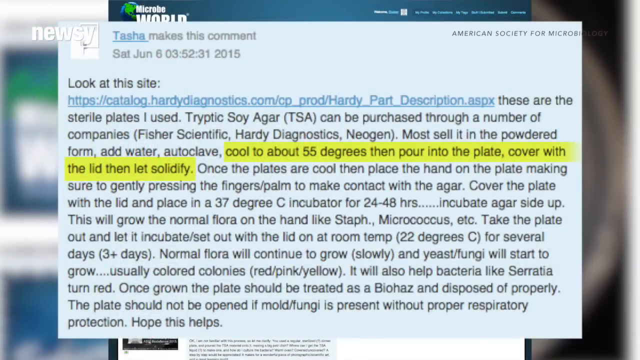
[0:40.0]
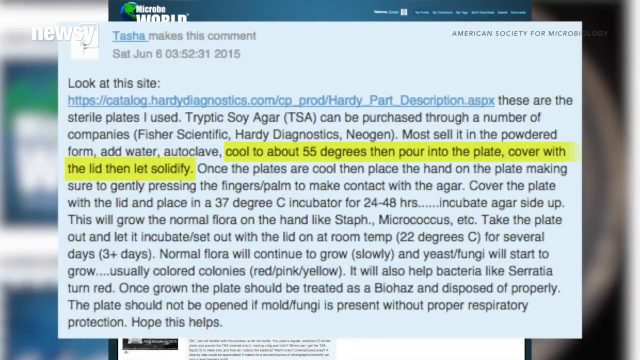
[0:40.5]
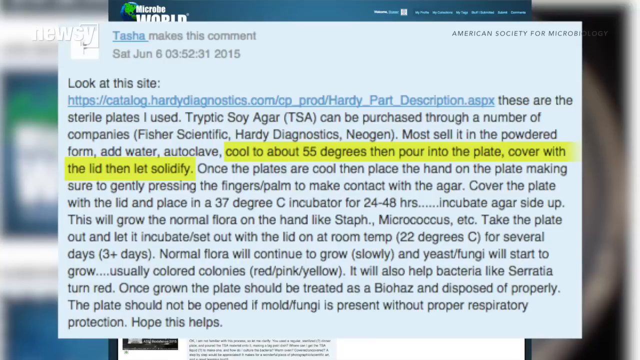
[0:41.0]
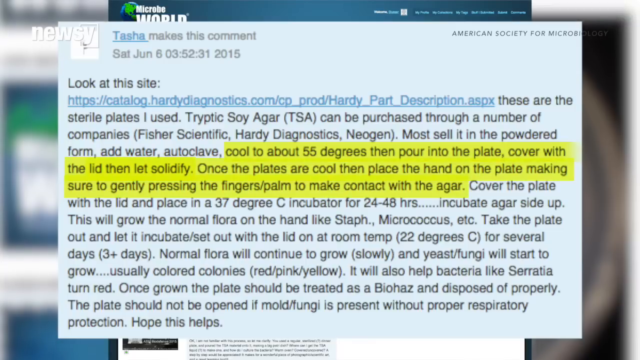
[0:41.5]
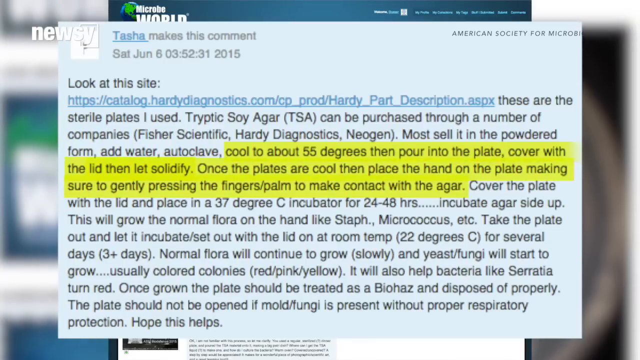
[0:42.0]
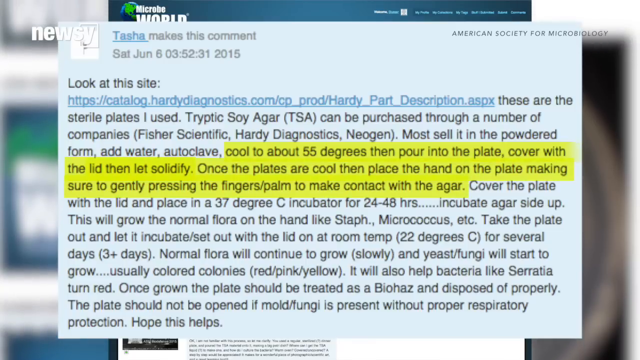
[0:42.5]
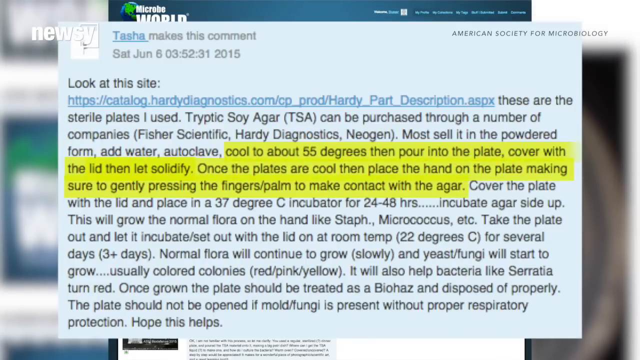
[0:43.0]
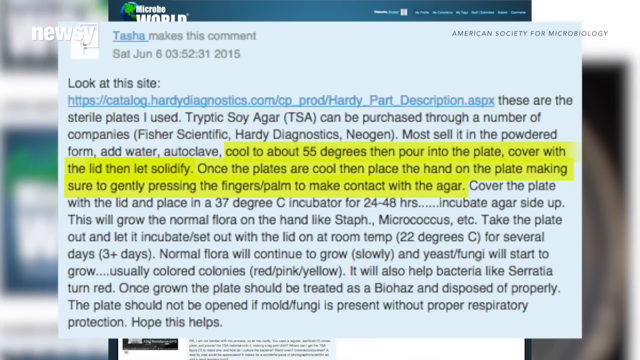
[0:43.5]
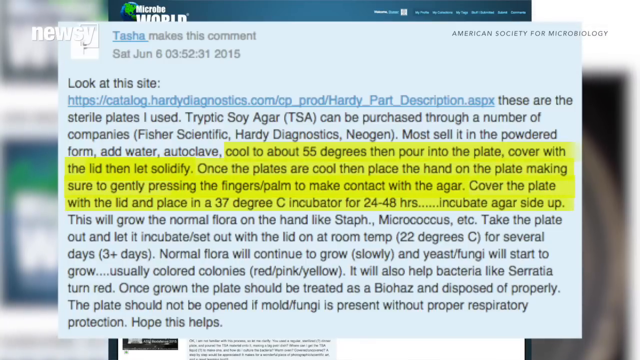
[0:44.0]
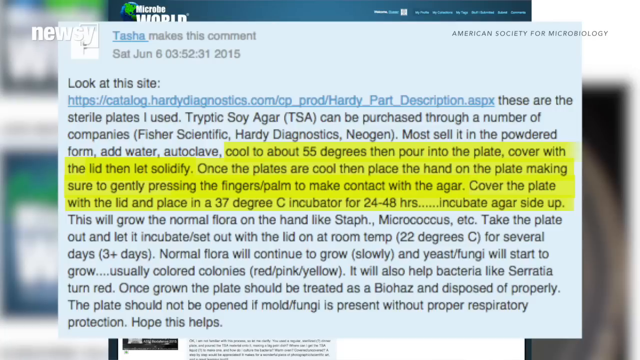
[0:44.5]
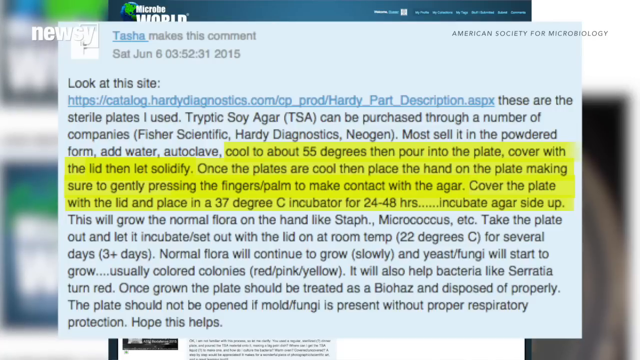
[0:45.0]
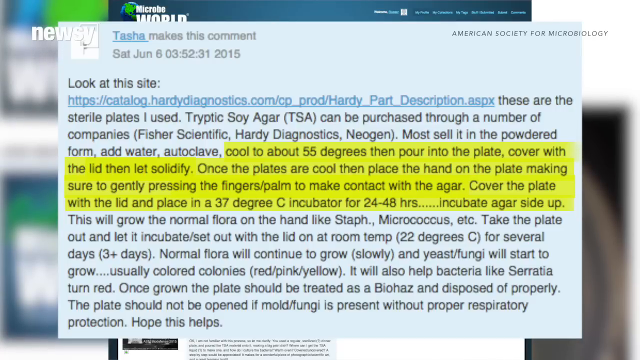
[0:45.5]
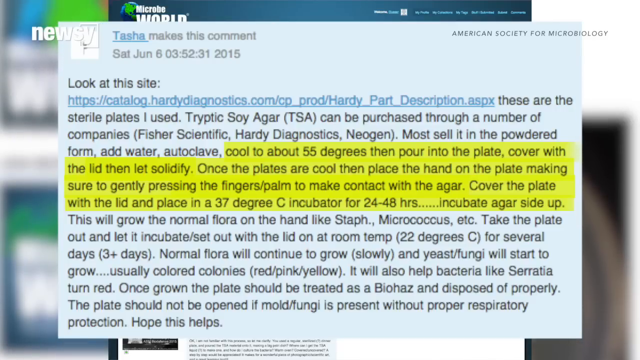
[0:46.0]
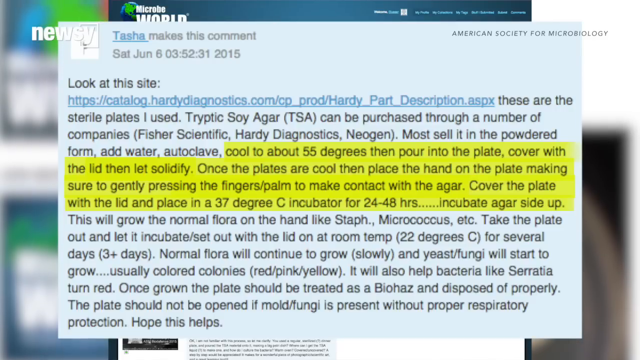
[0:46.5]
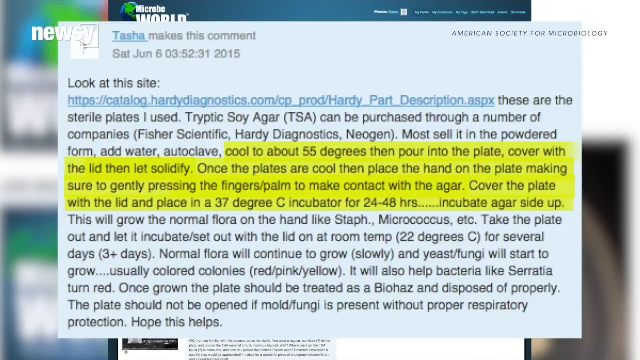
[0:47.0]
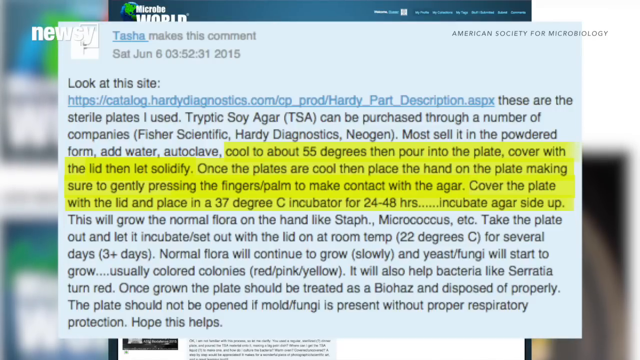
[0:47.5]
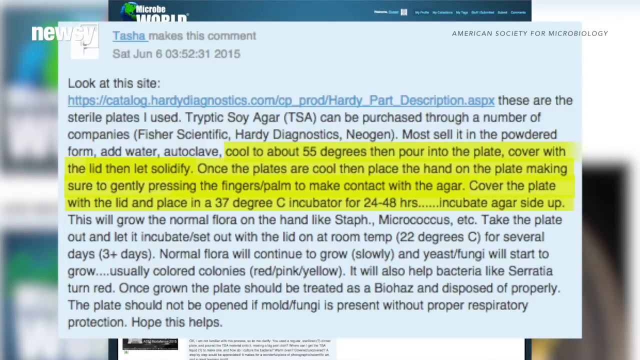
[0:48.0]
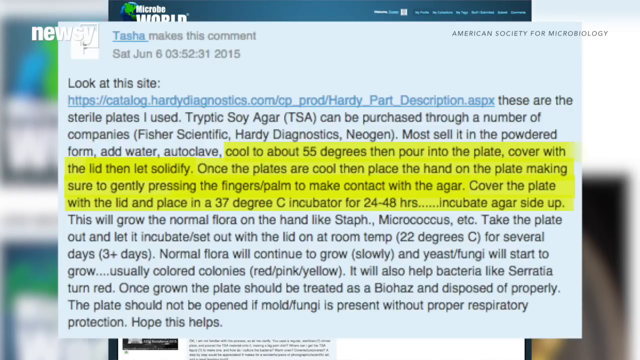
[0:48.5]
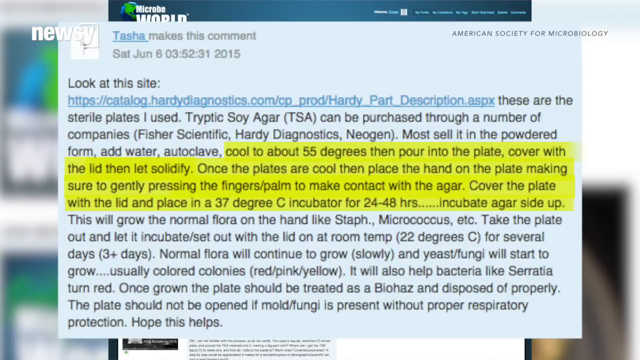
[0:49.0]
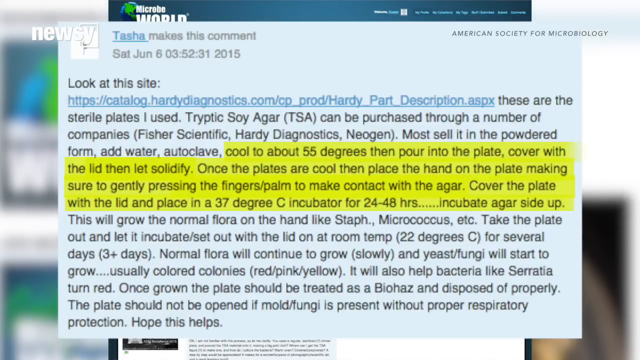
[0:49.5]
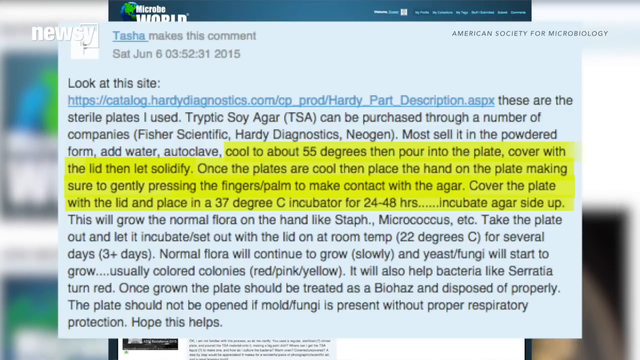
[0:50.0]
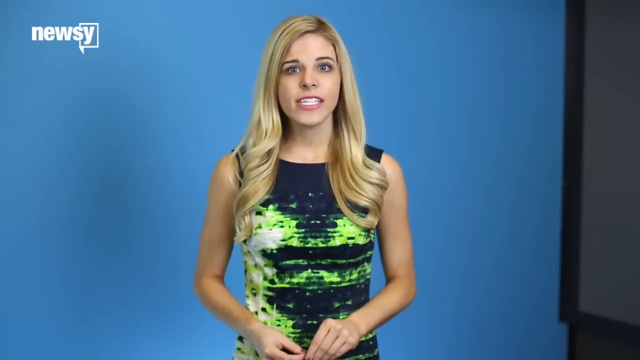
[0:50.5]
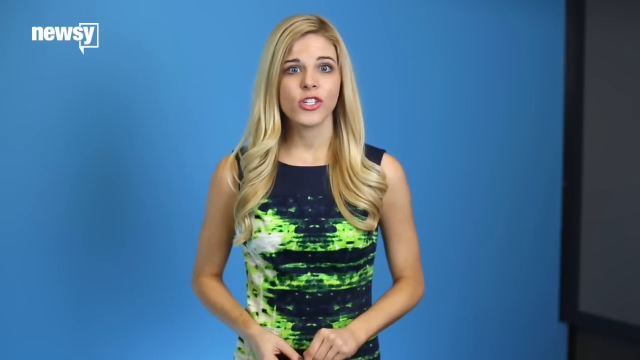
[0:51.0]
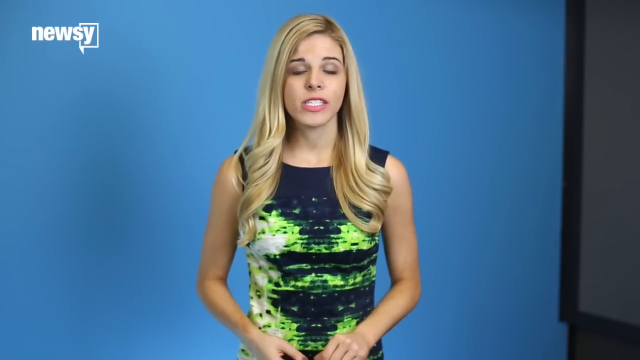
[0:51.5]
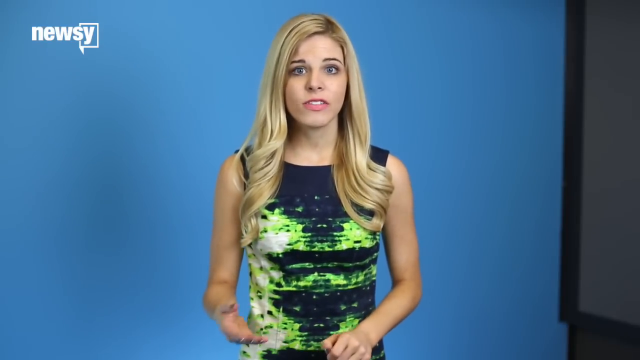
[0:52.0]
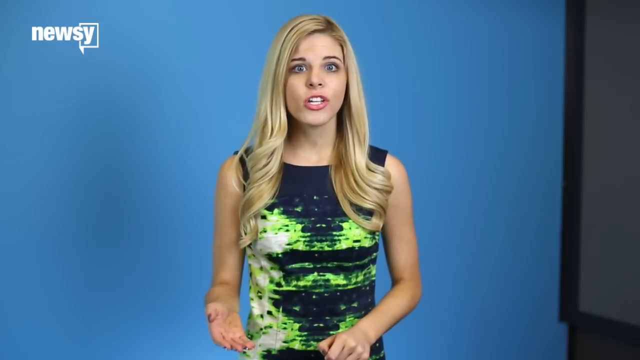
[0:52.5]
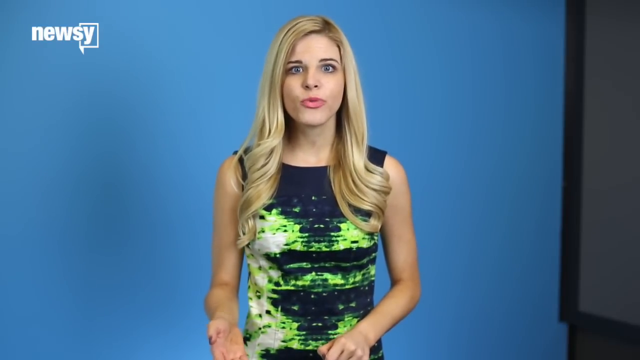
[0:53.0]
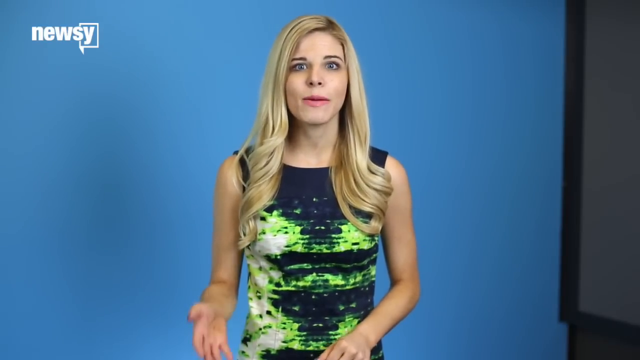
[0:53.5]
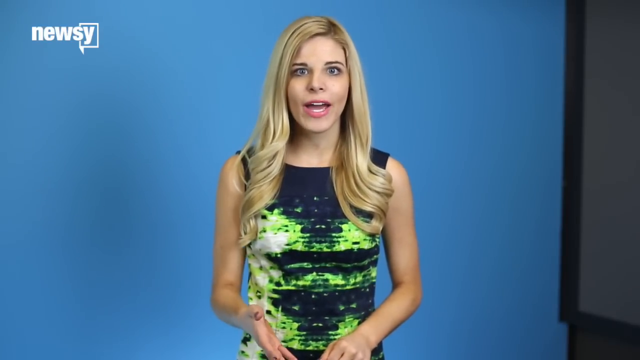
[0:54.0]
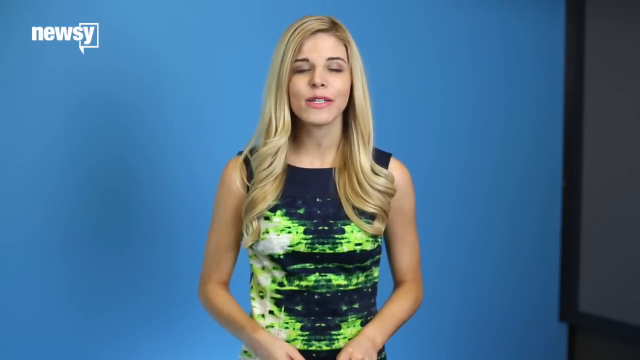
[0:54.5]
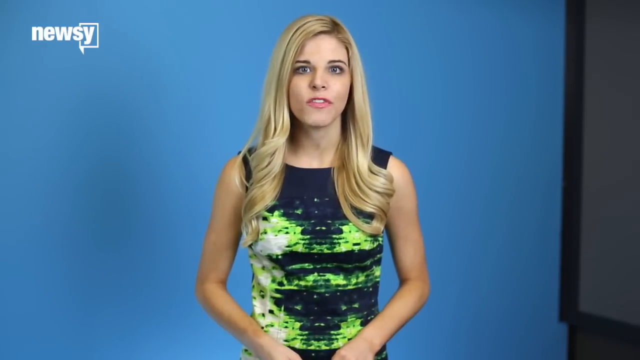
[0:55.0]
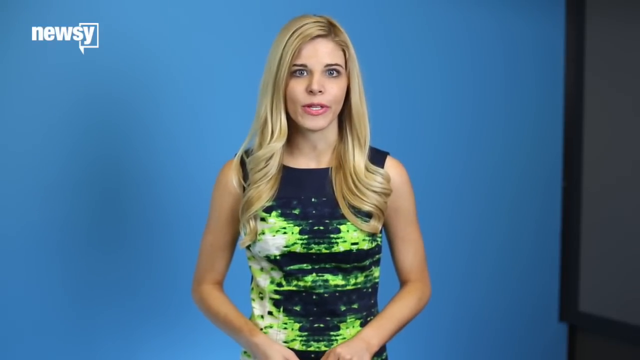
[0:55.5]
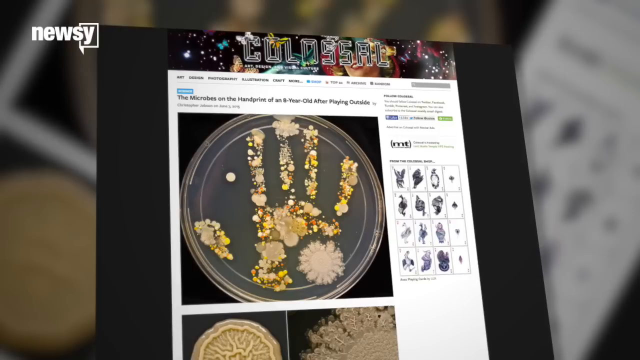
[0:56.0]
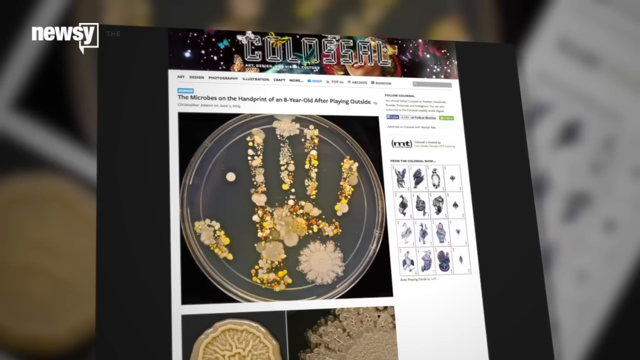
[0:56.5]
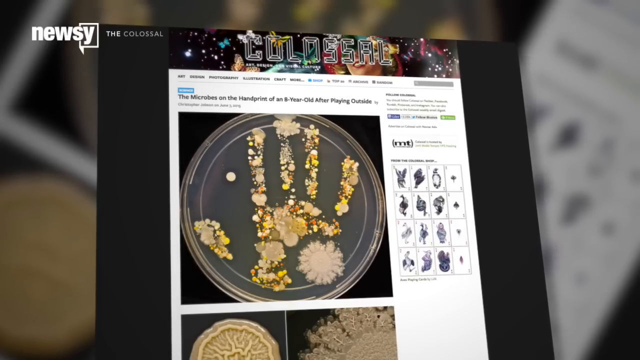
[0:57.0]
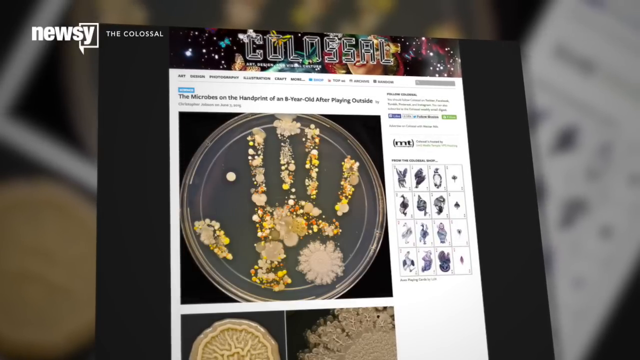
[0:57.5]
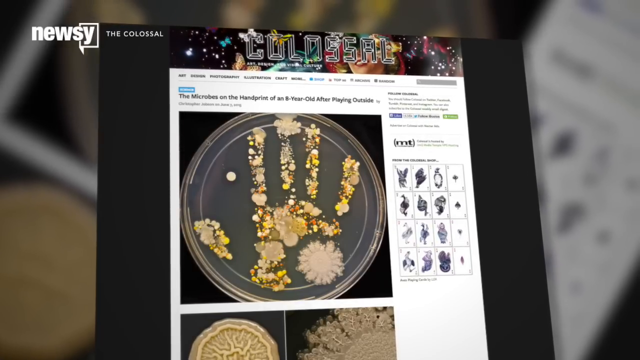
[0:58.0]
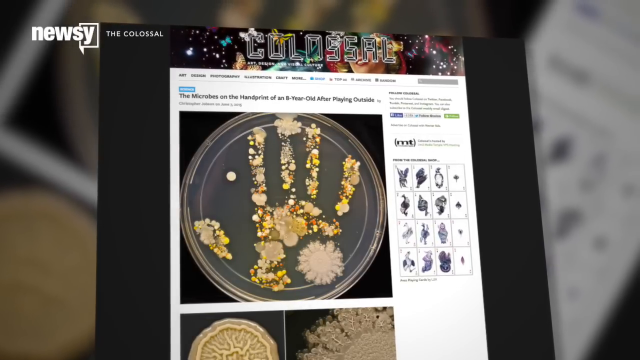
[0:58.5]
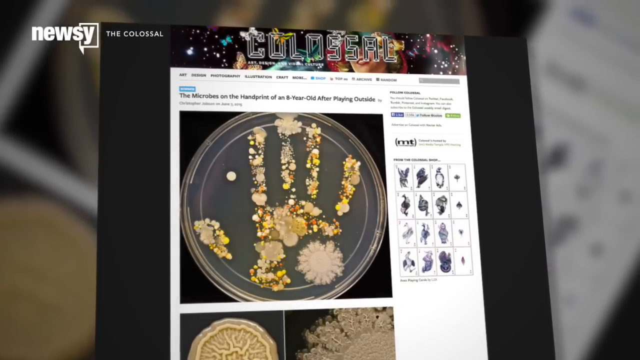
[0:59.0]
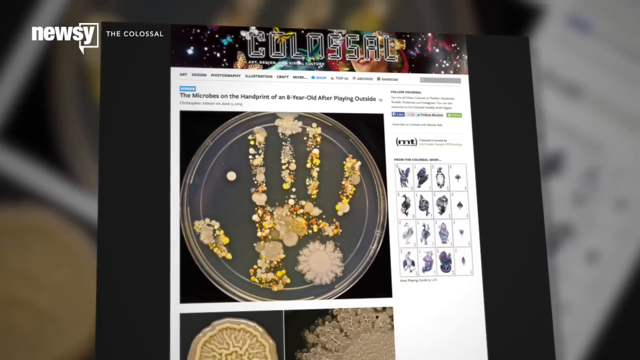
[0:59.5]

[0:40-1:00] The comment from Tasha about growing the handprint mould pattern in the petri dish is shown, with words in yellow beginning "cool to about 55 degrees then pour into the plate cover with the lid then let solidify", followed by instructions to place the hand on the plate, gently pressing the fingers and palm to make contact with the agar. It continues: "cover the plate with the lid and place in a 37°C incubator for 24-48 hours." The shot then cuts back to Katherine in her blue and lime green dress as she talks to the camera, moving her hand up and down to emphasise her points. Another image of the handprint in the Petri dish follows, with an article from Colossal about the microbes on the handprint of an eight-year-old after playing outside.